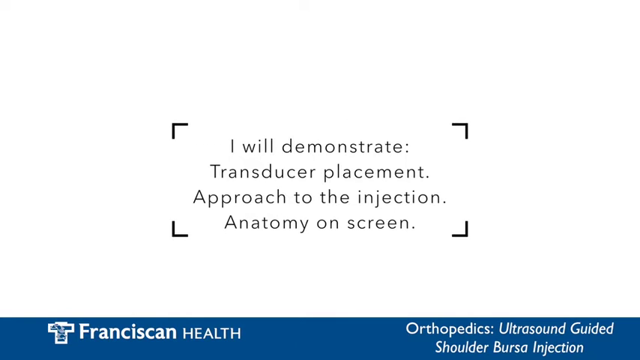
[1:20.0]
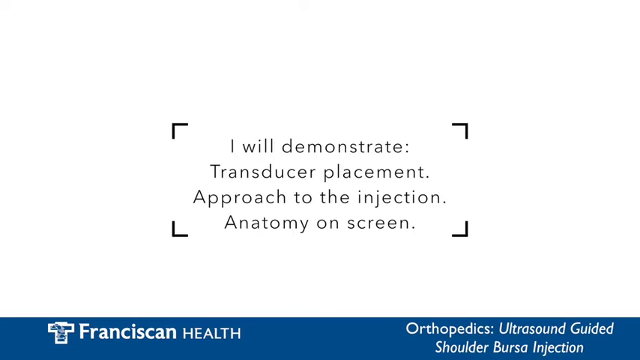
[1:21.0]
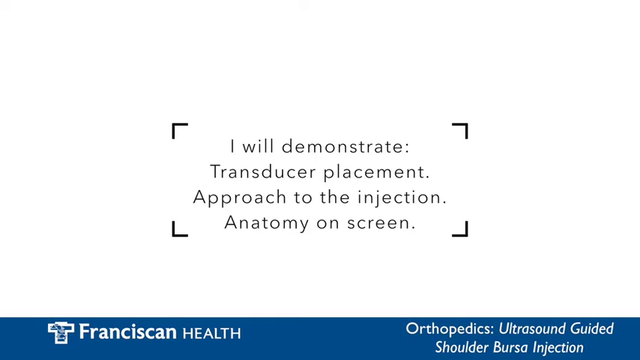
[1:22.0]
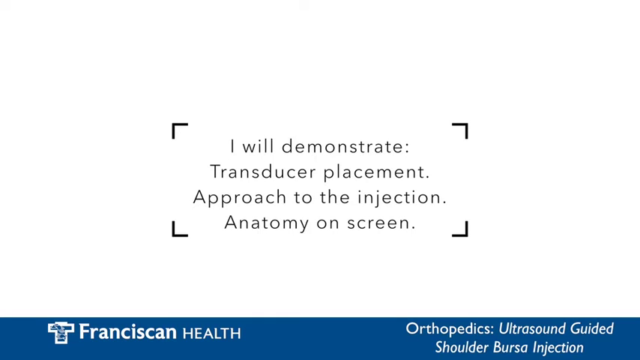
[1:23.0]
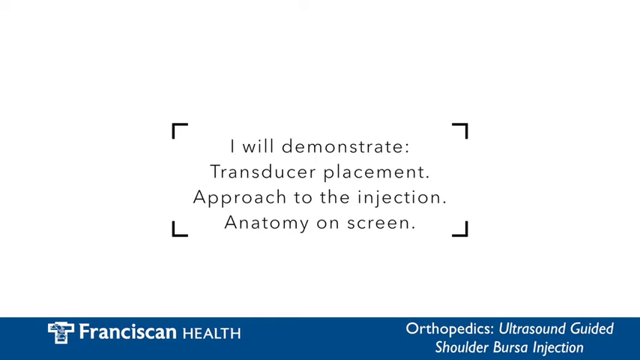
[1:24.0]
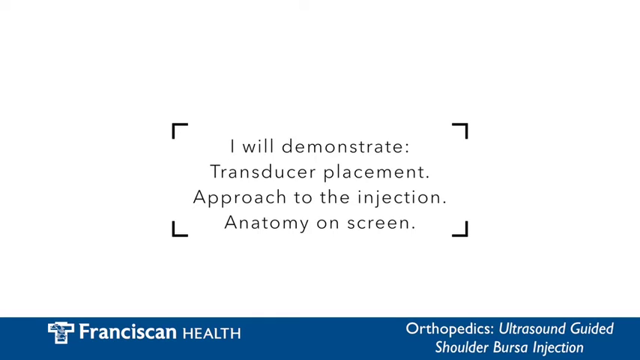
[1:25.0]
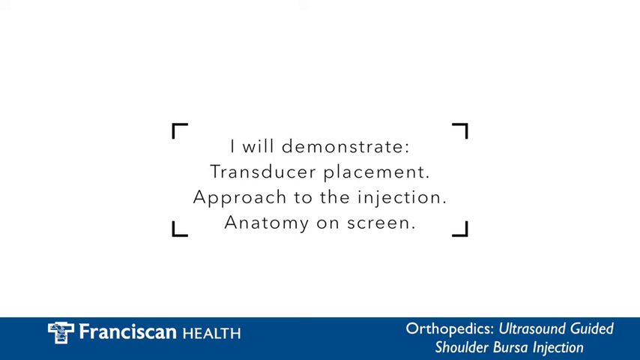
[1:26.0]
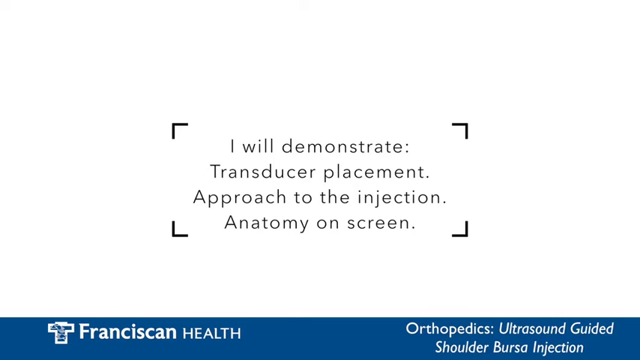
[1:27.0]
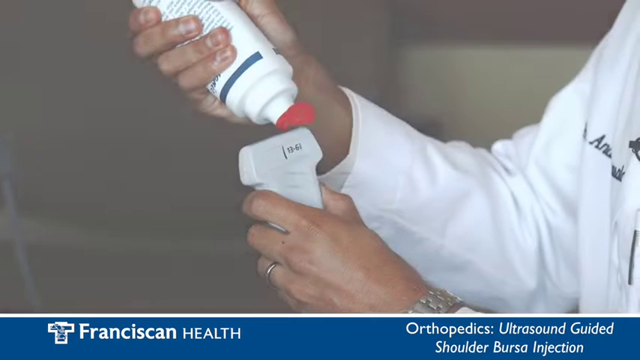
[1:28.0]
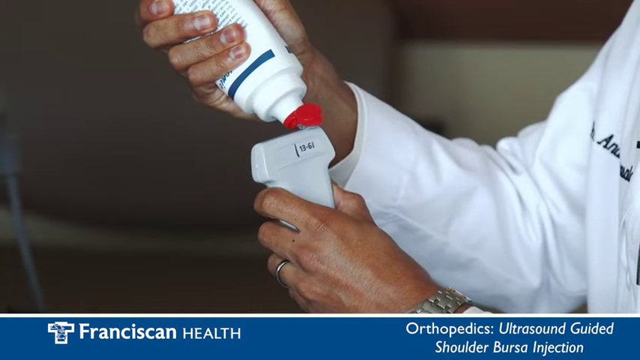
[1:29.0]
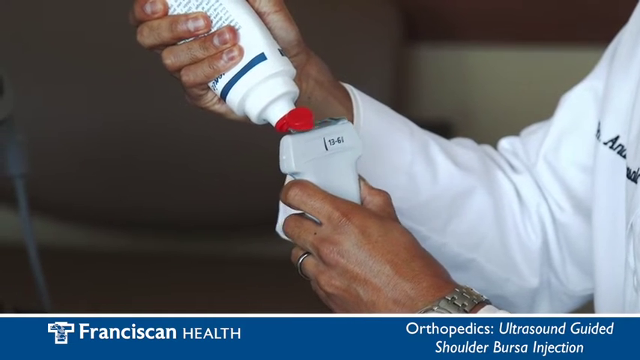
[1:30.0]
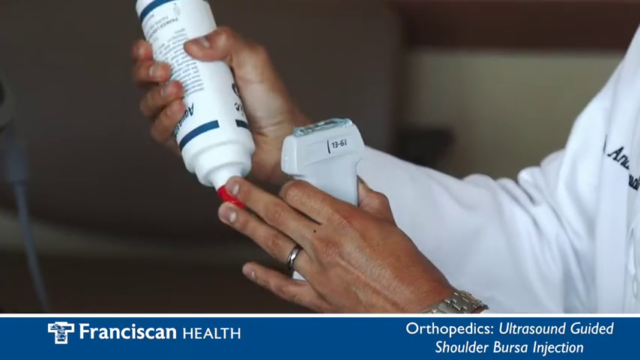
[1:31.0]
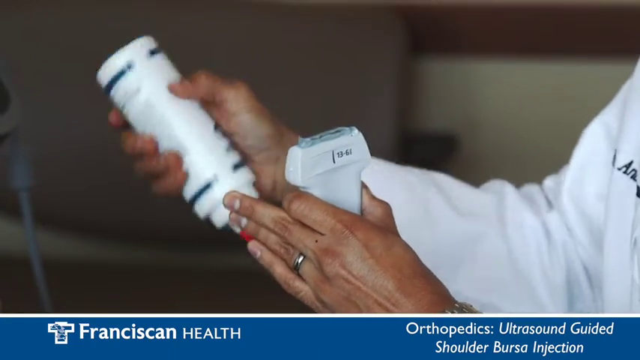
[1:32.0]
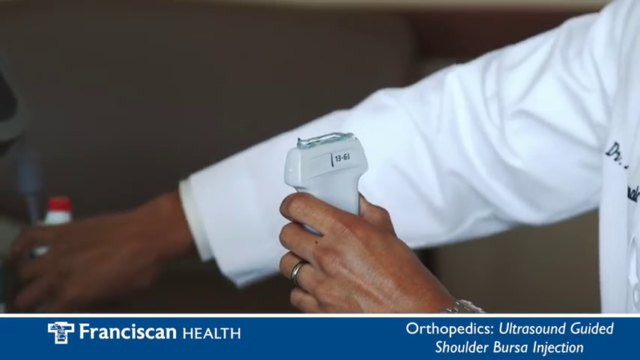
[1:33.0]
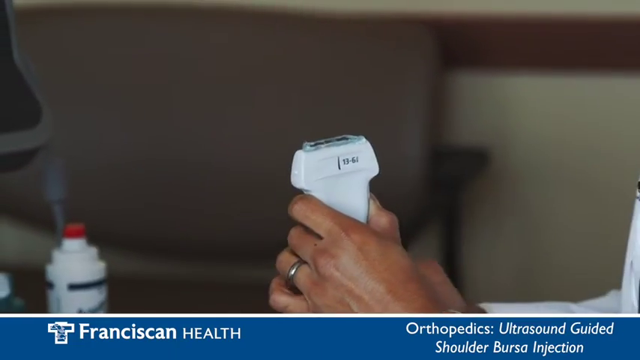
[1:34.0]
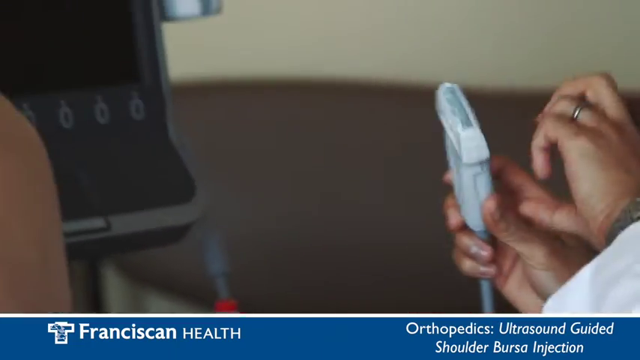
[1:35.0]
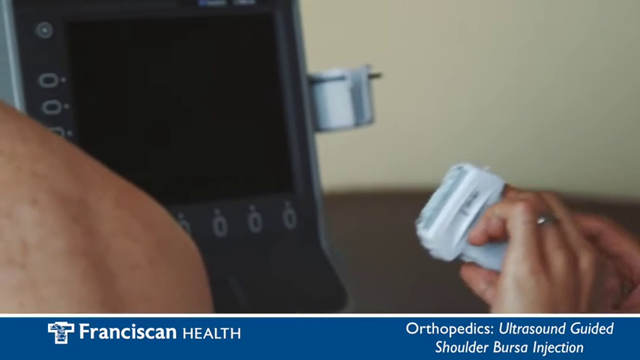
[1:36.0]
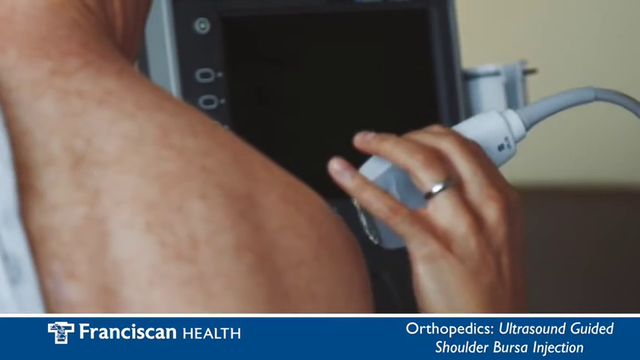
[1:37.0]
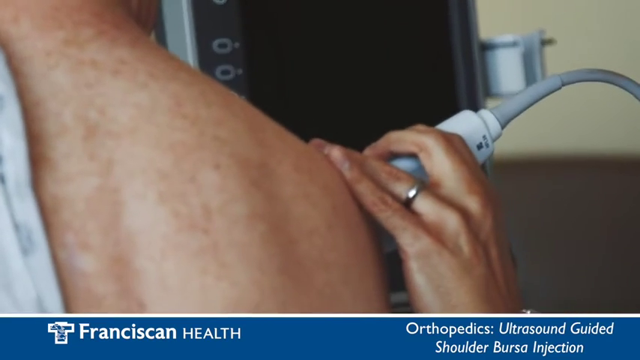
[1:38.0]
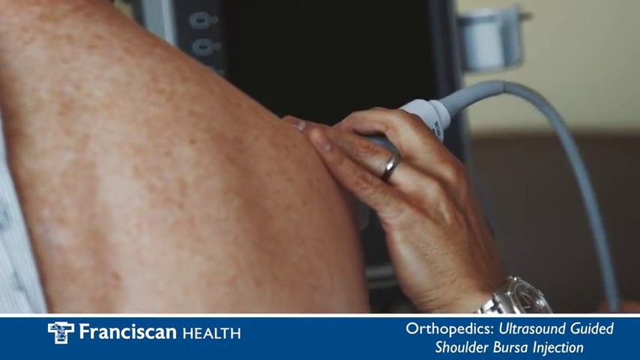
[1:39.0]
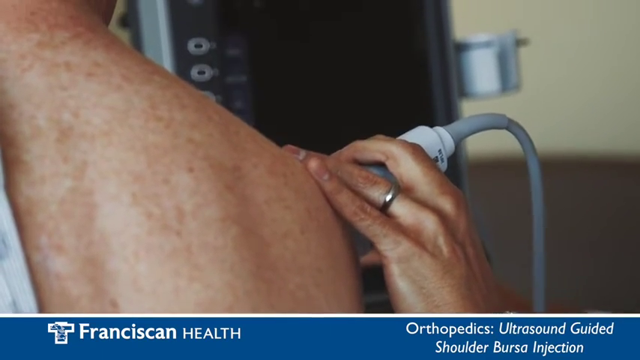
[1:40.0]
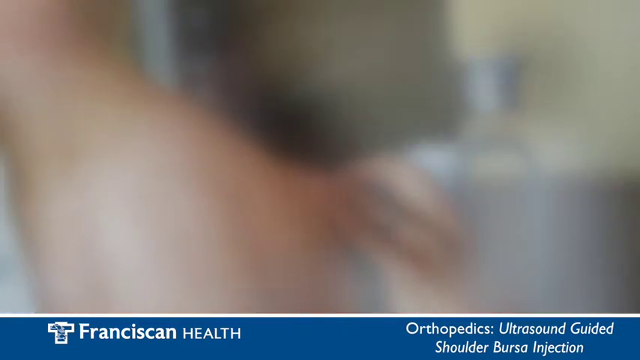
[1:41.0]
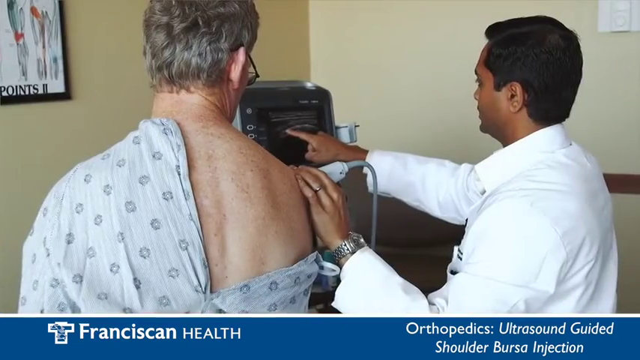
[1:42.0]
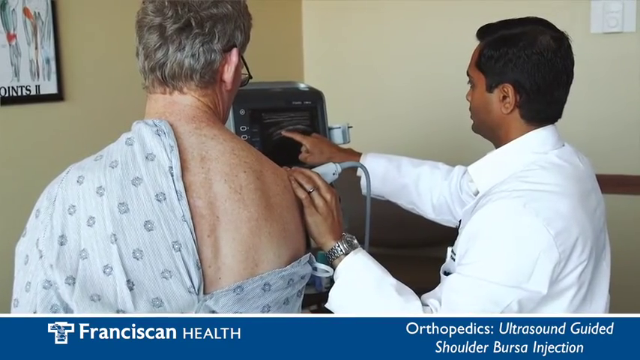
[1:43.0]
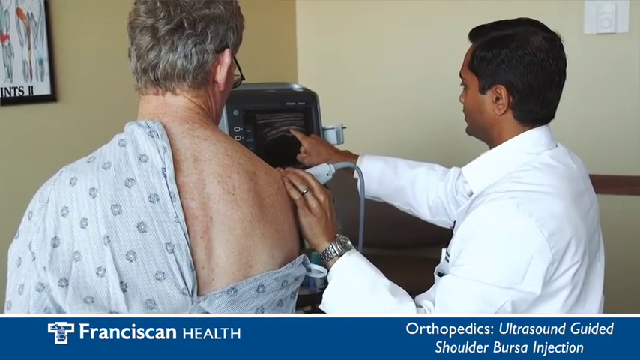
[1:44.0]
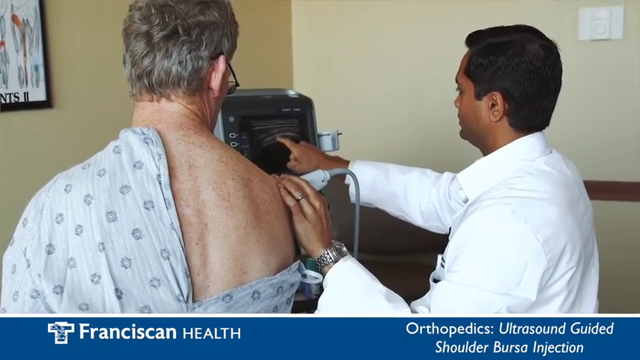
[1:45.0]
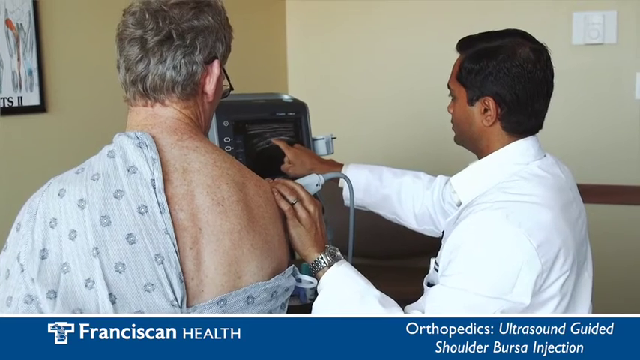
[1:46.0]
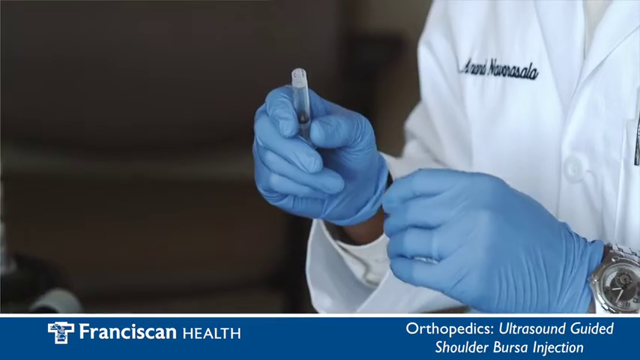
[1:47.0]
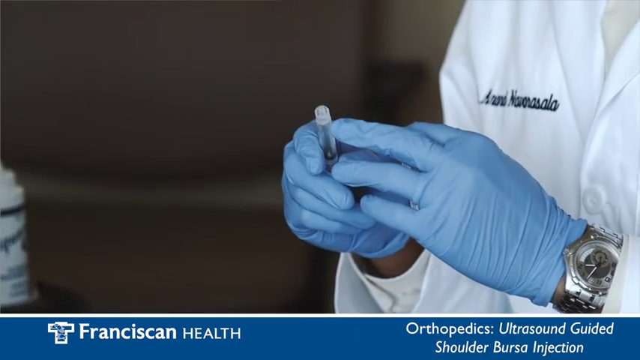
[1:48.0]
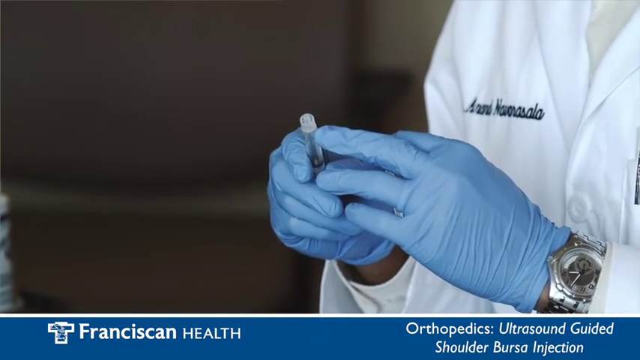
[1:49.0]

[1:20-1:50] The words "I will demonstrate transducer placement approach to the injection anatomy on screen" are shown, surrounded by four black corners. The doctor then puts some type of gel onto the scanner, which looks to be an ultrasound scanner based on the blue banner at the bottom. The ultrasound gel bottle is white with blue stripes and text and a red cap. He rubs the scanner against the patient's shoulder, talking to the patient about what is on the screen. Then he pulls out the needle, or the video cuts to him grabbing the needle still in its casing. The doctor has put on blue gloves and holds the needle in his left hand while describing it with his right.